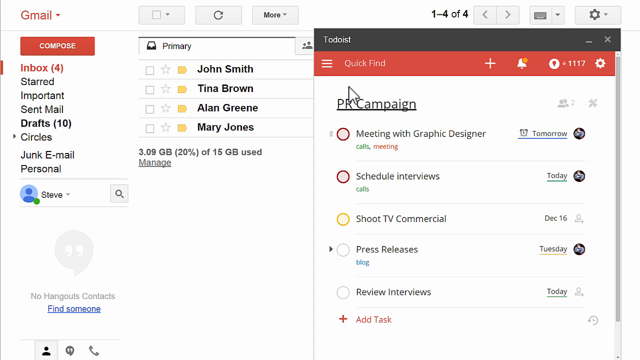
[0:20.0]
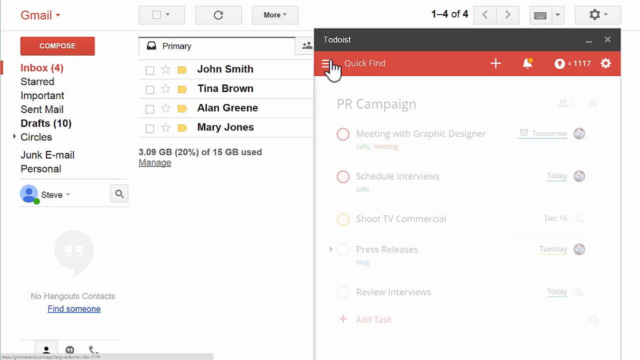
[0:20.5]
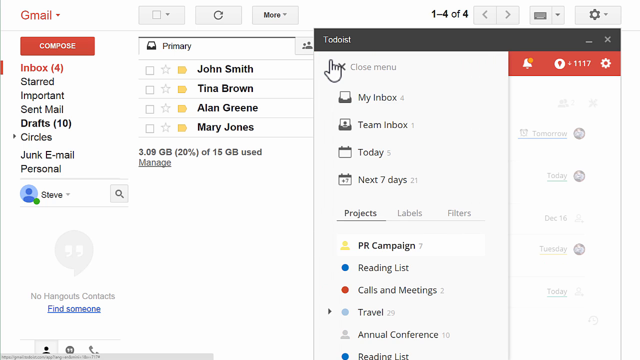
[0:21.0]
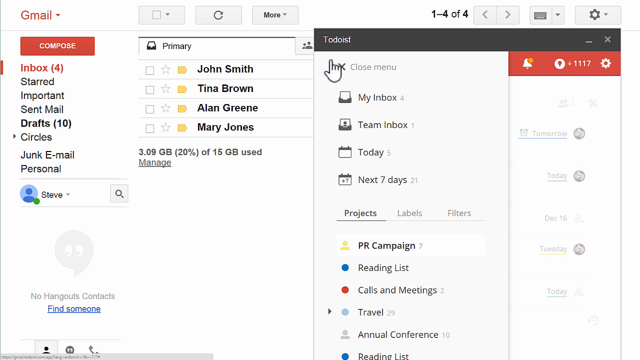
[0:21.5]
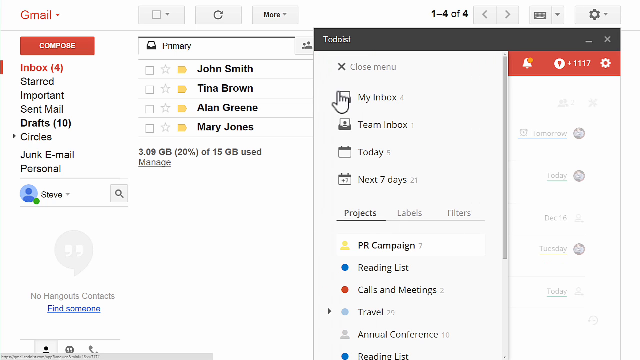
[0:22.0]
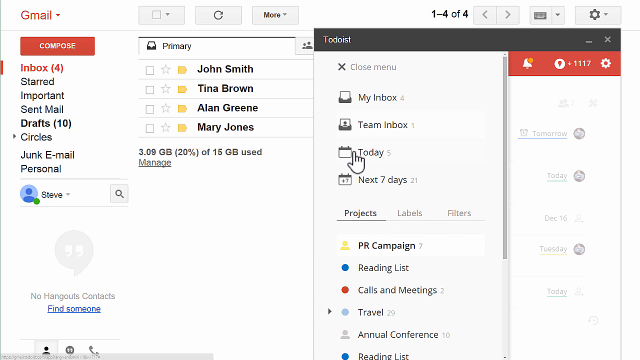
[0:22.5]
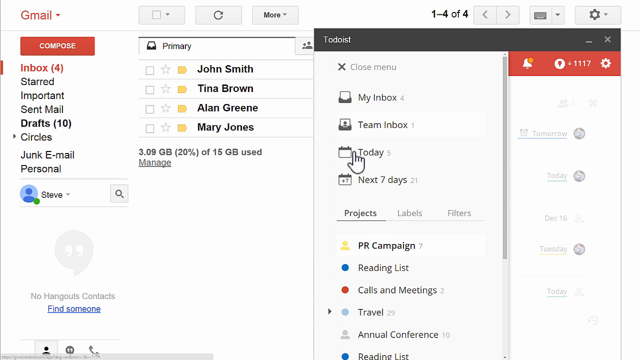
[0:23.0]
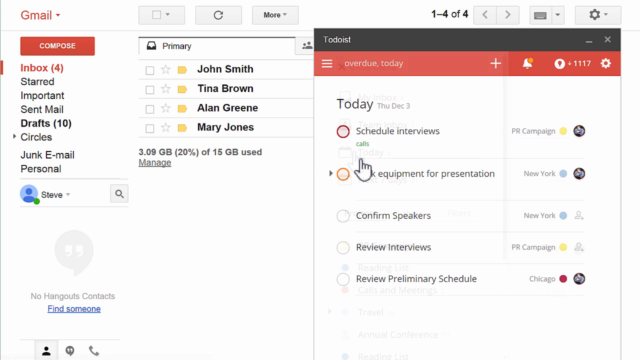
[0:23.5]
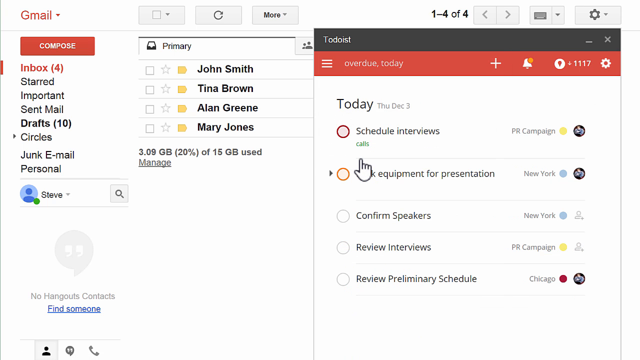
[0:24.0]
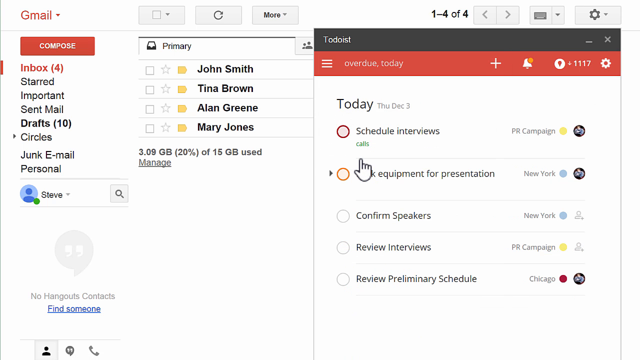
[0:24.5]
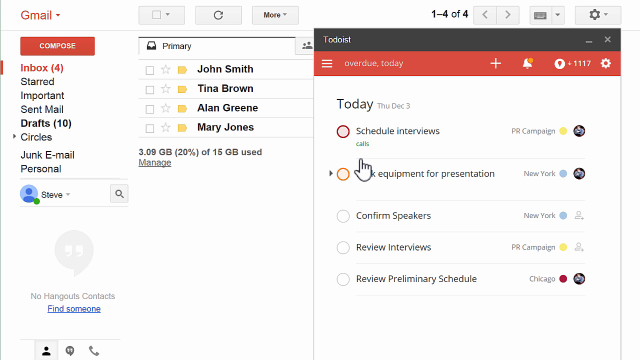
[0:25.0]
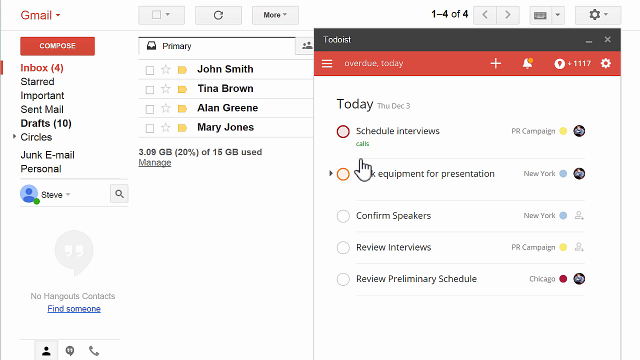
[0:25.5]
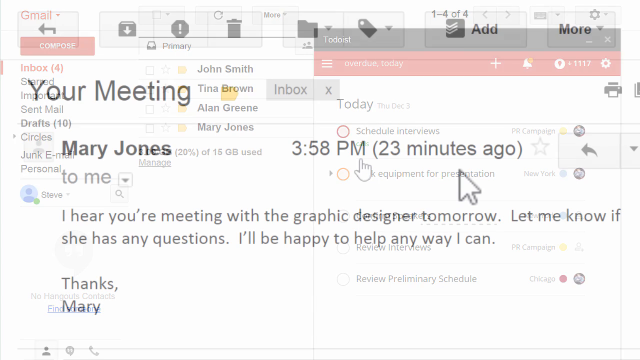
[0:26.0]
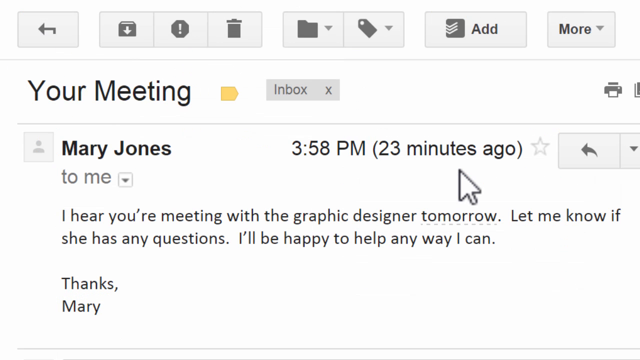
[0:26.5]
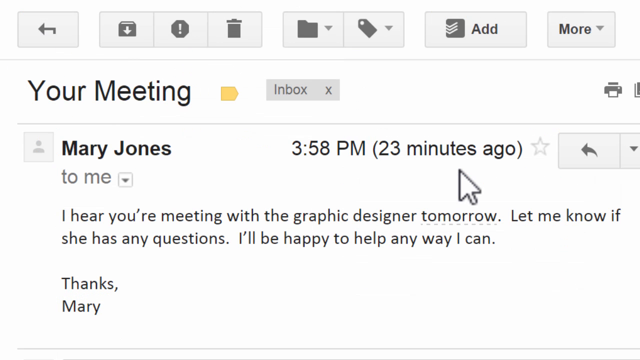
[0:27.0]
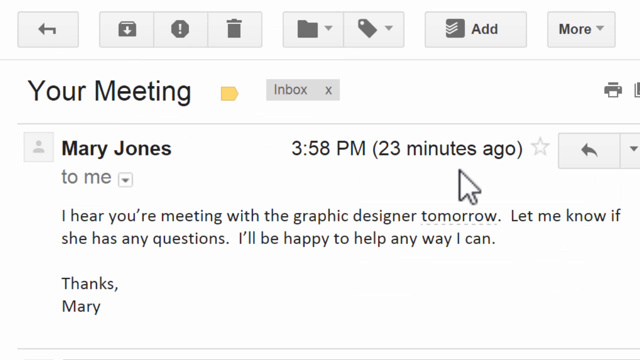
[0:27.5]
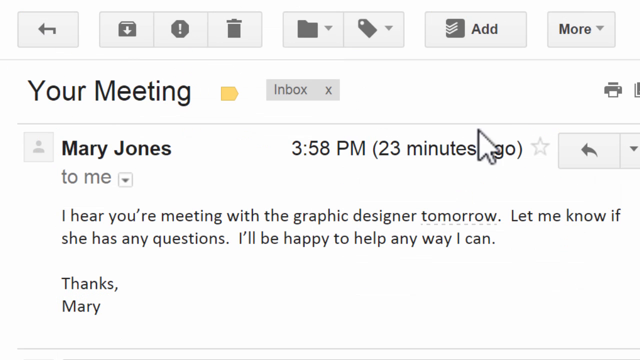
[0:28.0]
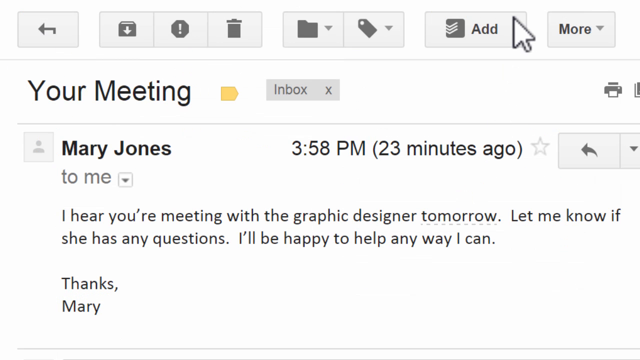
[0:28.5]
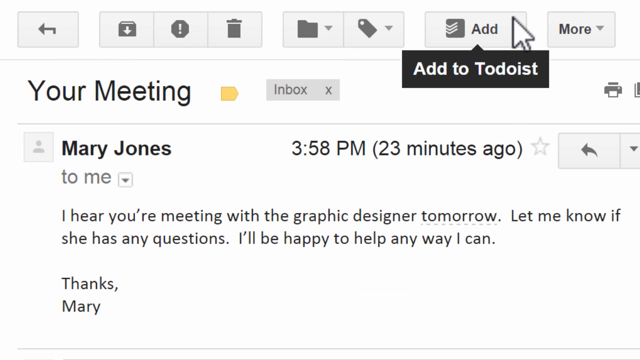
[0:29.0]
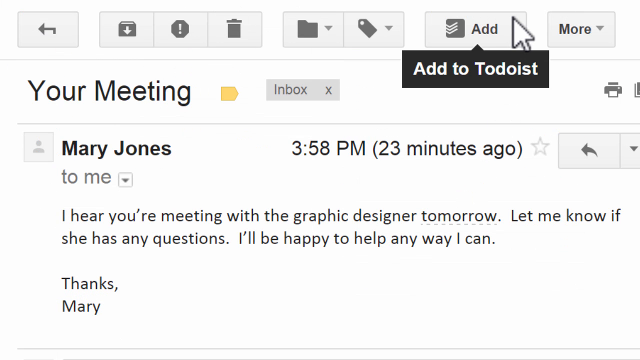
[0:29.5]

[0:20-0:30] A Todoist panel appears over to the right. Under the Todoist name there is a pancake menu on the left, a quick find beside it, a plus button, a notification bell with an orange dot, a white circle with "1,117", possibly notifications, and a settings gear. Below this is "PR campaign" with different items on the list. Off to the left is the Gmail inbox, listing compose, inbox, starred, important, sent mail, drafts, 10, circles, junk email, and personal. The person selects the pancake menu and it pops open, then selects today, and the today to-do list comes up. The screen switches to "your meeting" with a Mary Jones, showing "3:58 p.m." and, in parentheses, "23 minutes ago." The person selects "Add Todoist."